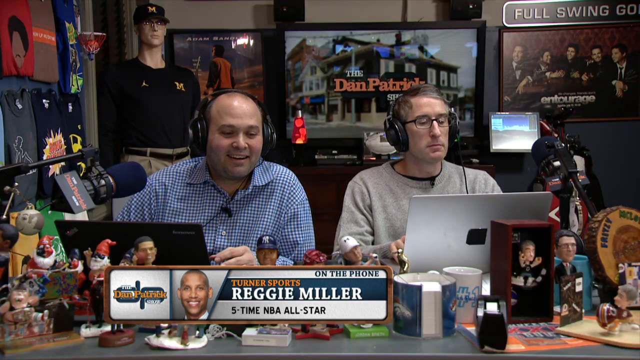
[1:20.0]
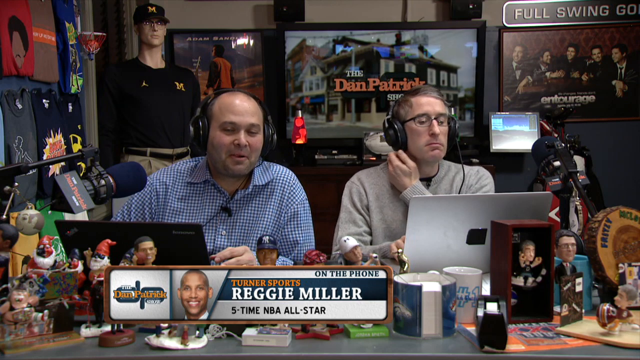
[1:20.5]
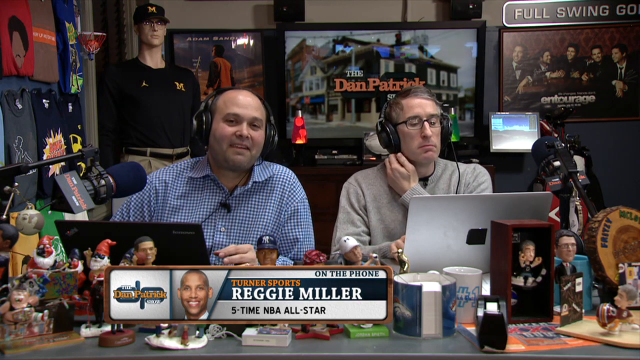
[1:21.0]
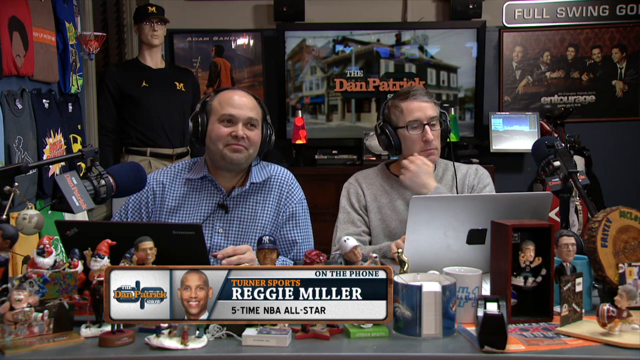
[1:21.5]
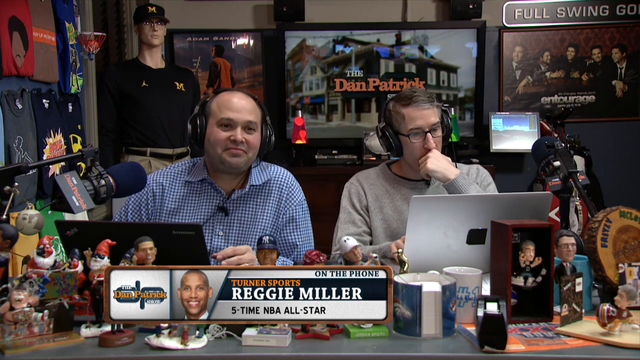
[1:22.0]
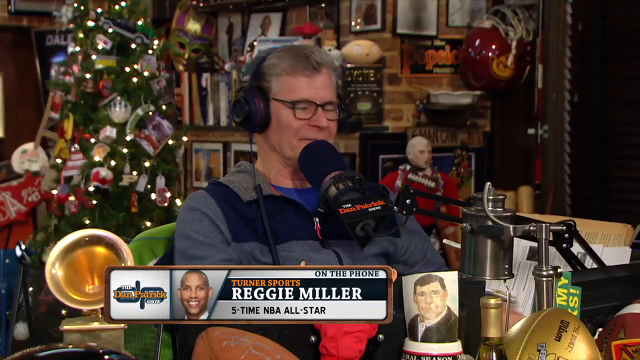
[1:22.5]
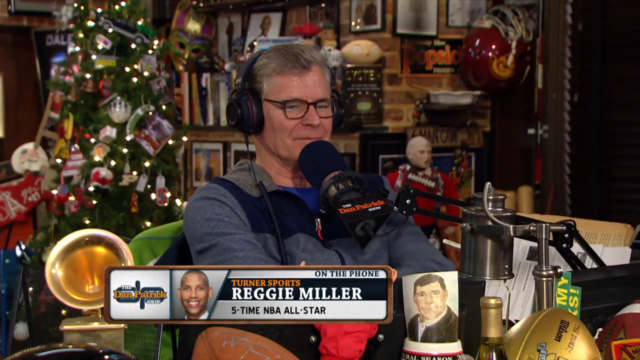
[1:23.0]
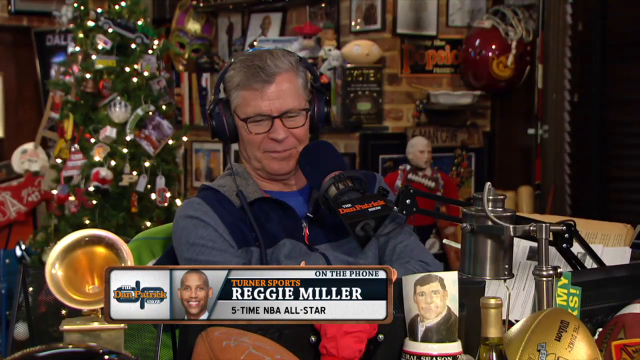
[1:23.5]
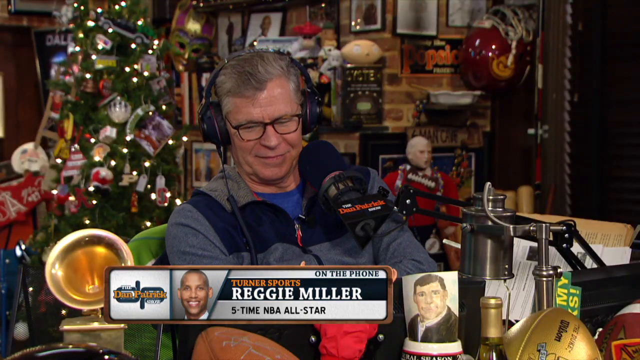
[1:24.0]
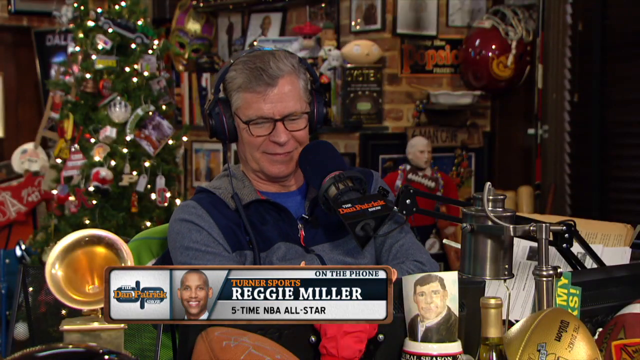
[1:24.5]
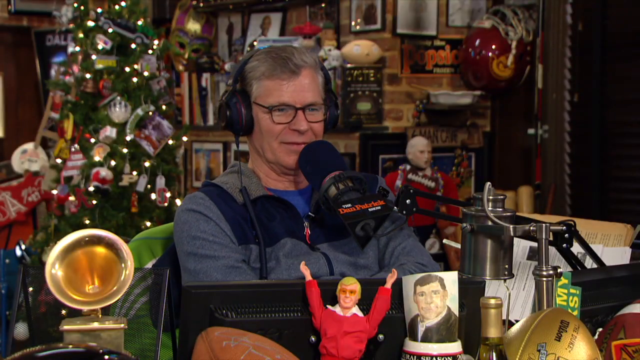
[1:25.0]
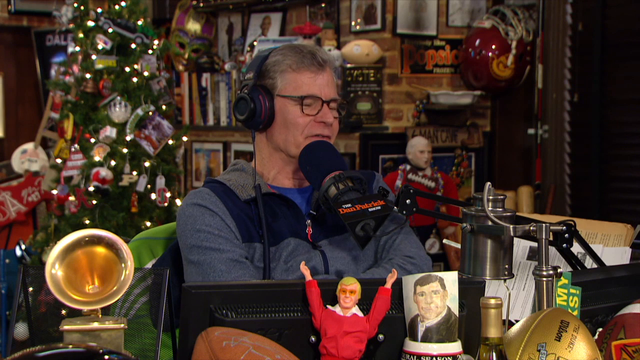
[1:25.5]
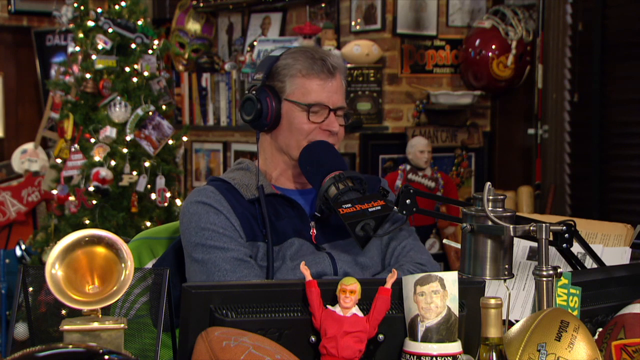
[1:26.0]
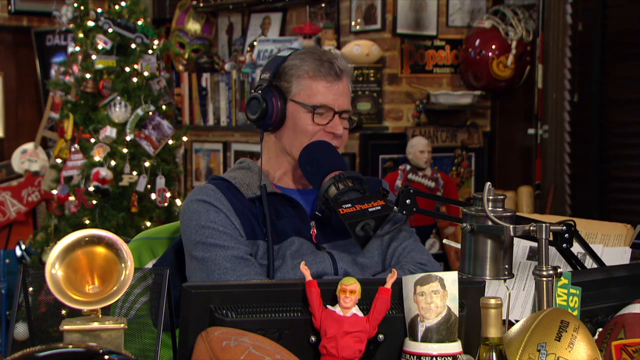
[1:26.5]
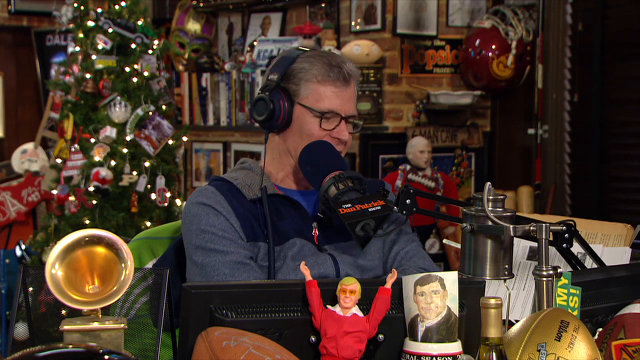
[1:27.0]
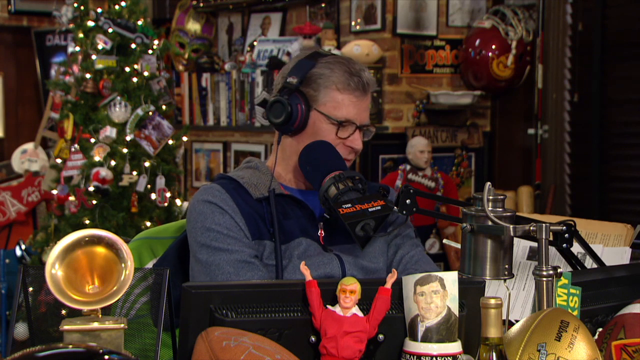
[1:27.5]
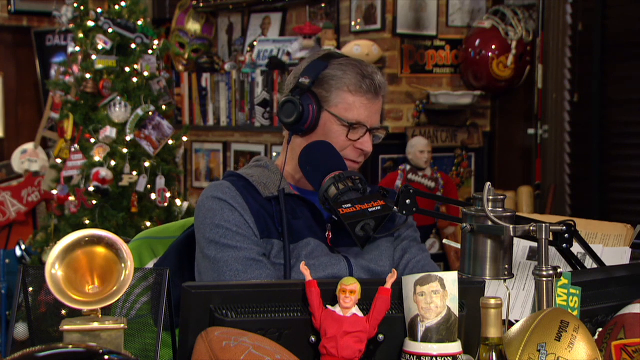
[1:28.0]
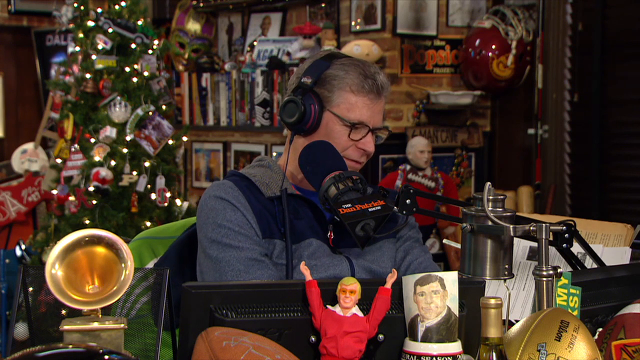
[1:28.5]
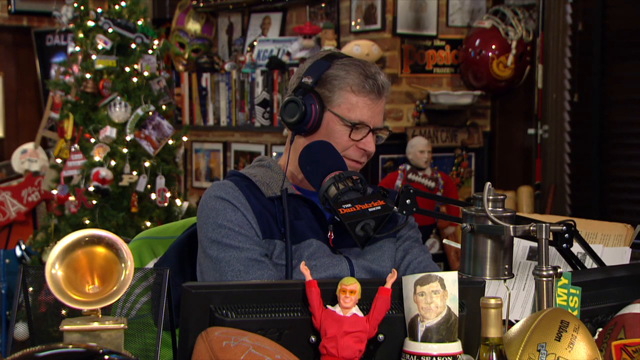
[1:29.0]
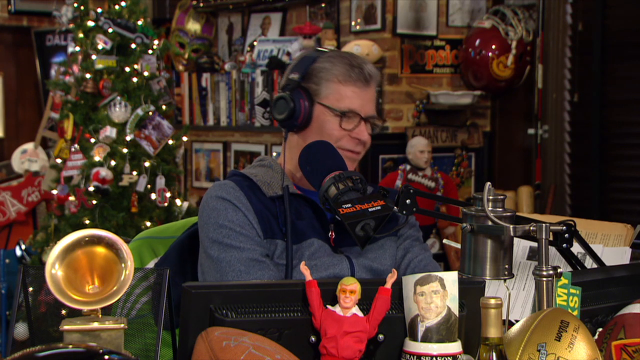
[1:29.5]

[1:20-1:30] The balding guy on the right licks his lips a little and laughs slightly, while the other guy seems not to find it funny and bites his fingernails a bit. The shot returns to the host, Dan Patrick, with his arms folded, speaking, looking down and leaning a little to the left. His chair appears to have a bright lime green racing-style detail on the shoulders.